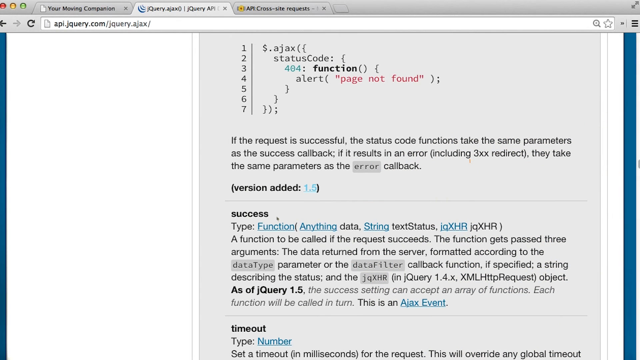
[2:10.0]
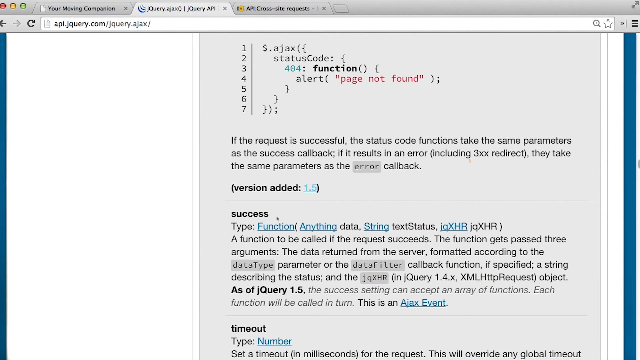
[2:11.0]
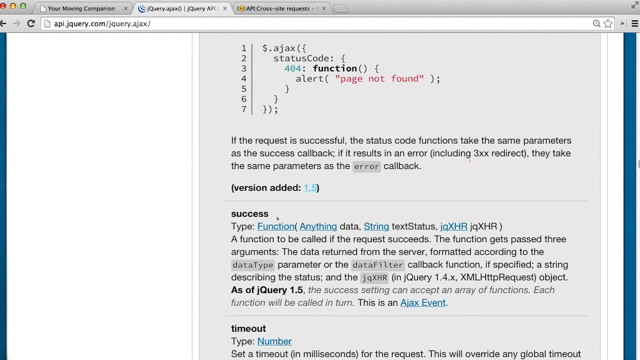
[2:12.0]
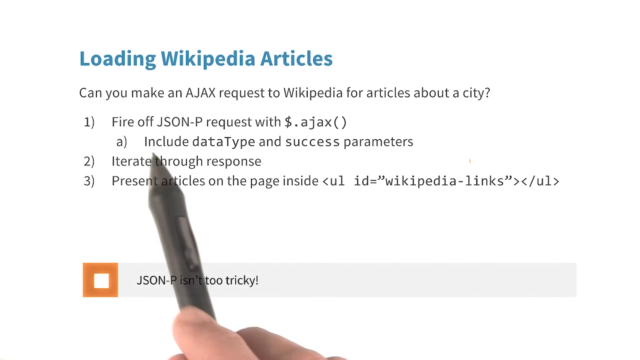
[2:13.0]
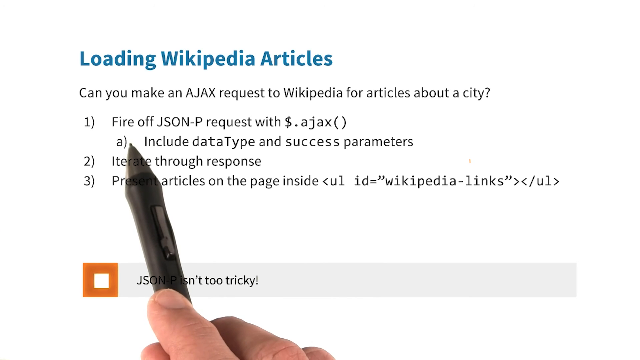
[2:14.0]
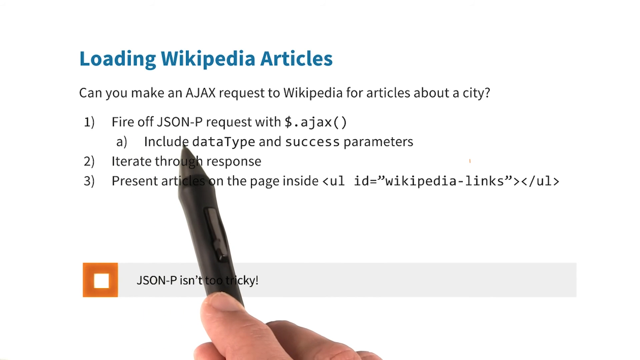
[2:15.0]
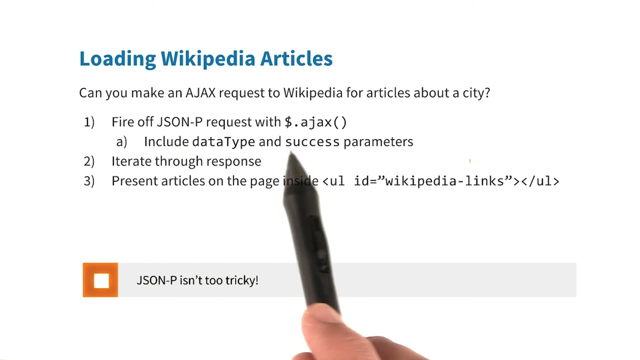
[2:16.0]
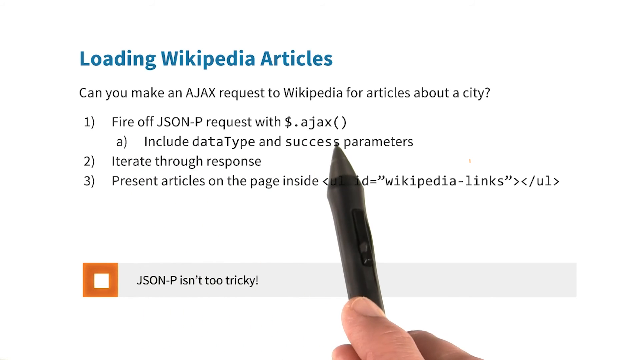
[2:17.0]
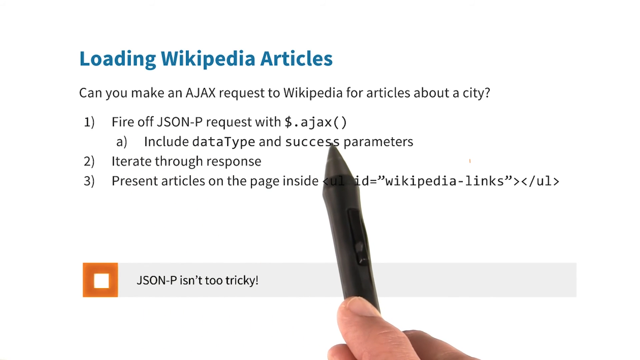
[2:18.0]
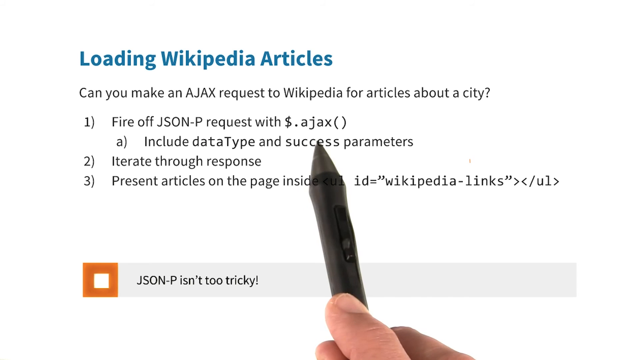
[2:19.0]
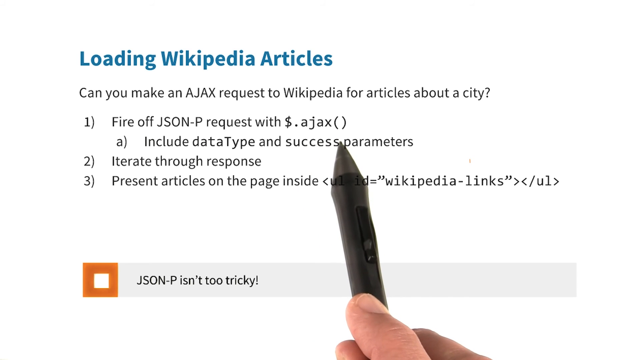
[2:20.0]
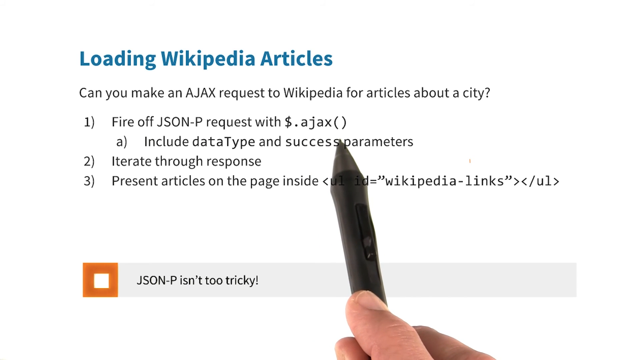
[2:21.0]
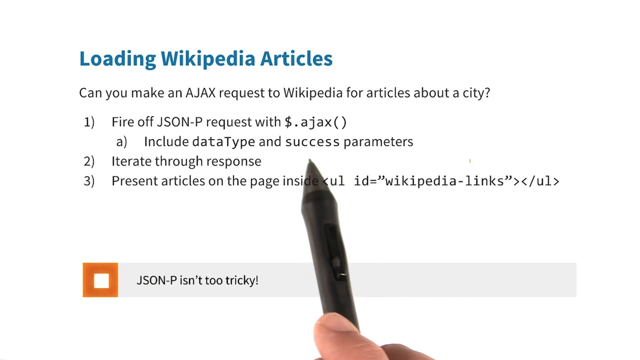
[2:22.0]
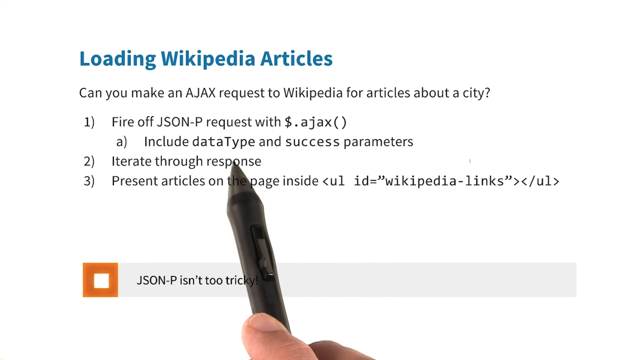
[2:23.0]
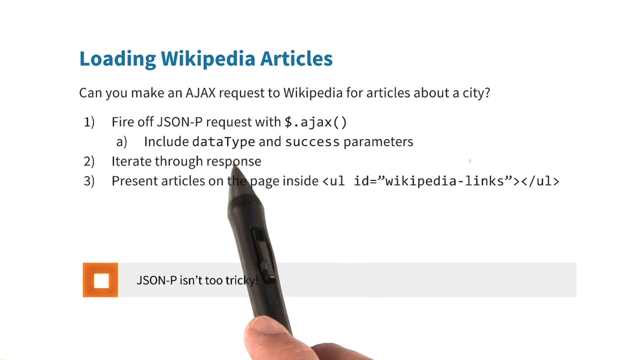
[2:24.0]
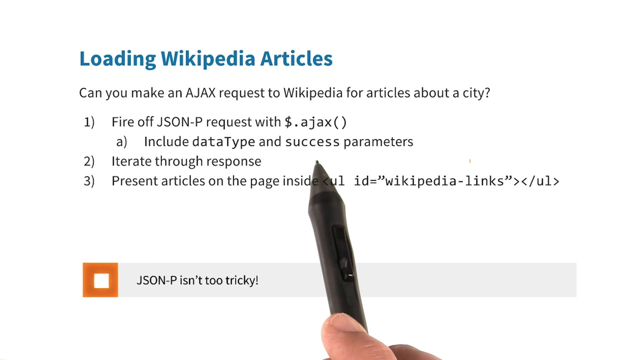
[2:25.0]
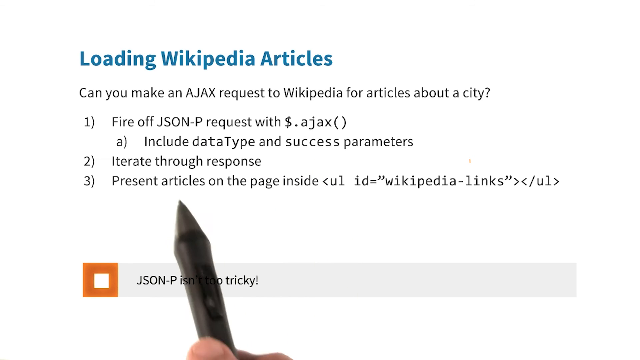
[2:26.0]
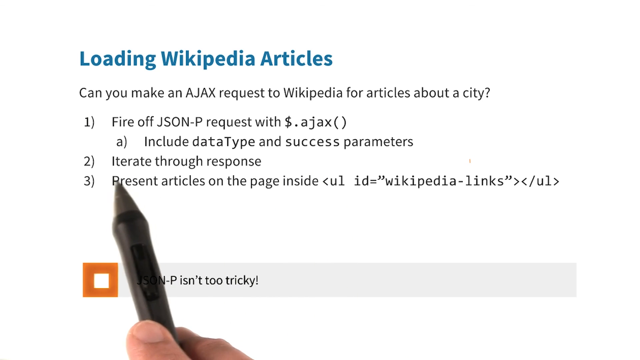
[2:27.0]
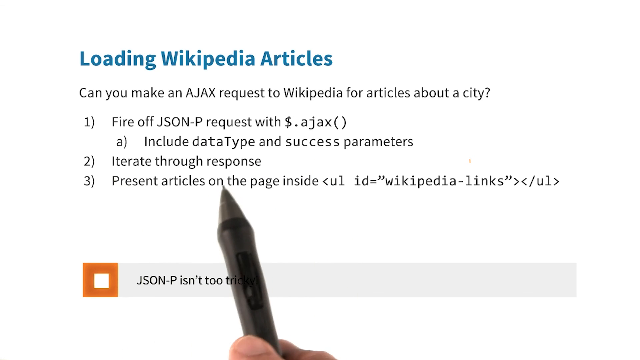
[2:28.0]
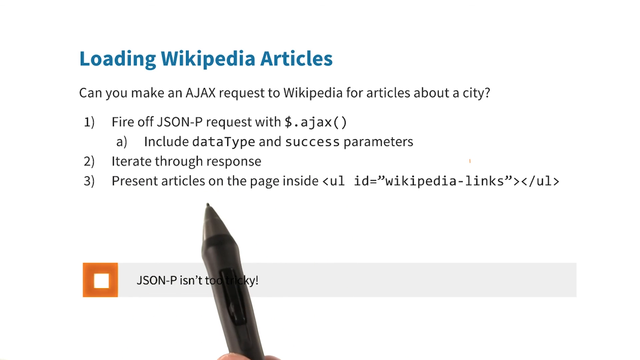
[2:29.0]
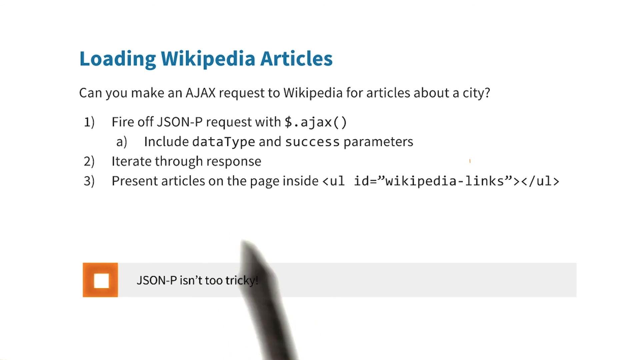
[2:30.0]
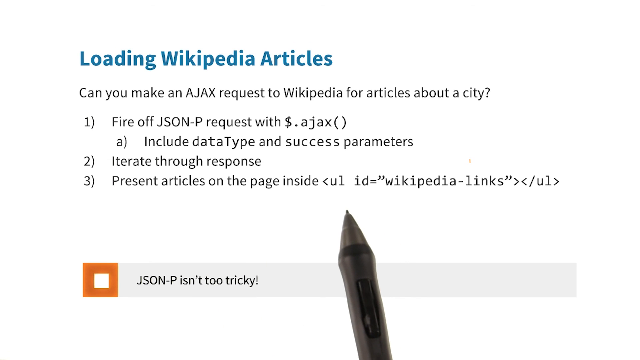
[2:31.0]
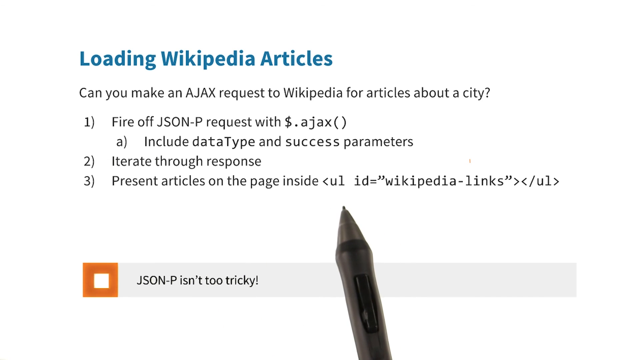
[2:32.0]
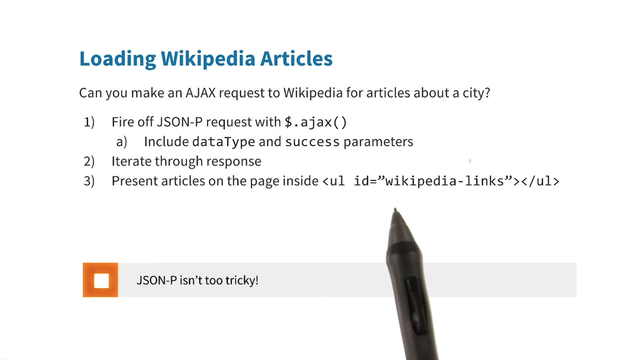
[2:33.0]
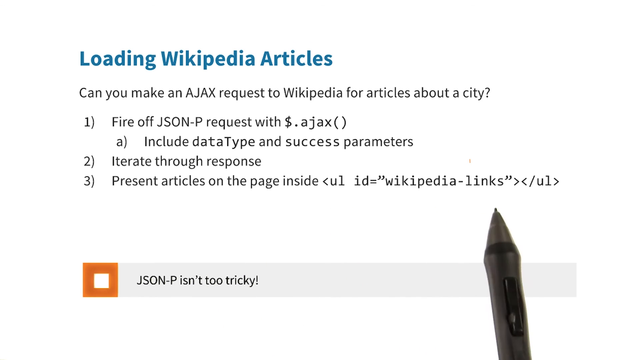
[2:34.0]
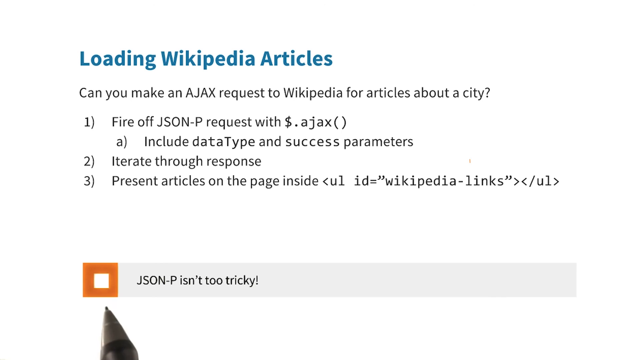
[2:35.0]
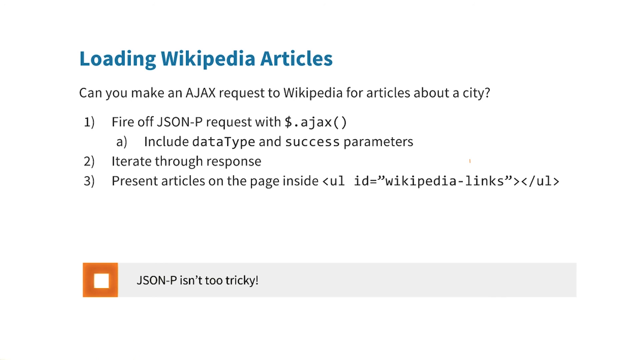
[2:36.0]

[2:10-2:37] A page of information quickly disappears and another page appears, titled "loading Wikipedia articles can you make an Ajax request to Wikipedia for articles about a city." A pen moves word by word under the first explanation, then moves to the second explanation and then the third. It makes no marks, just waving underneath the words, and stops to tap out "Wikipedia links." It hesitates between movements, not moving smoothly but tapping. The pen is black, held by what appears to be a man based on the size of the fingers and hand. Sometimes the marks left by the pen are not visible.